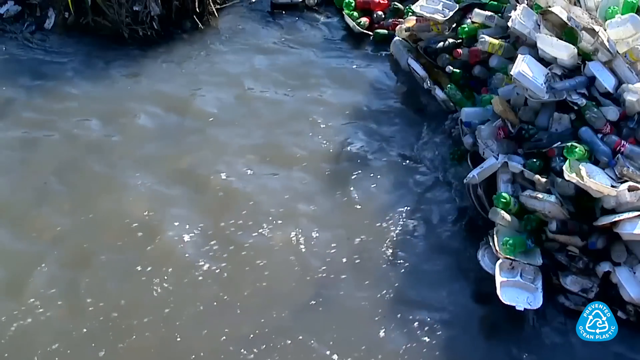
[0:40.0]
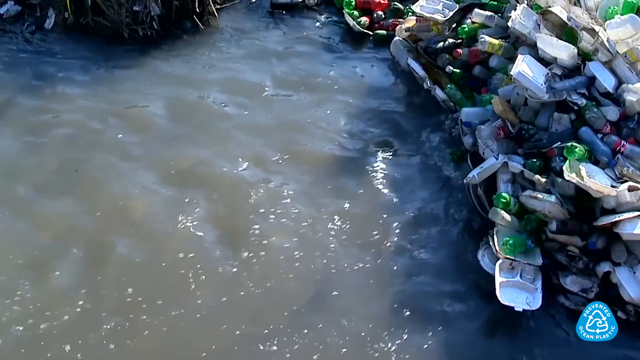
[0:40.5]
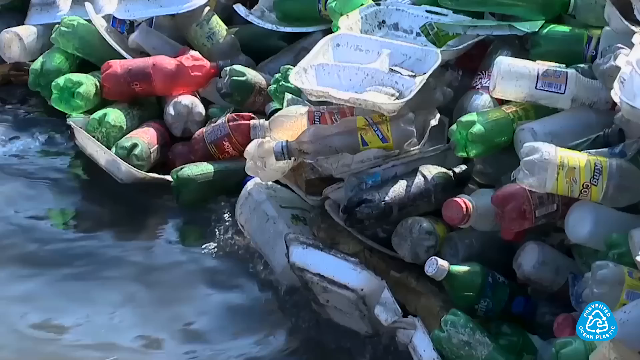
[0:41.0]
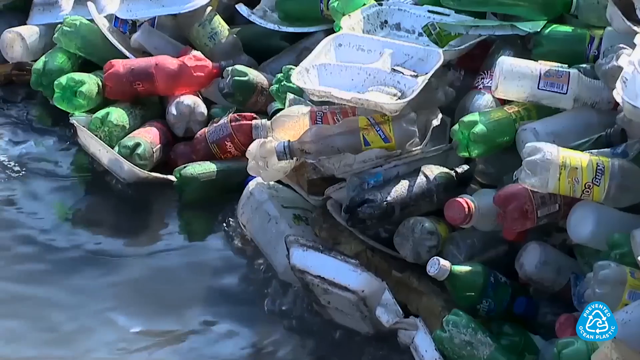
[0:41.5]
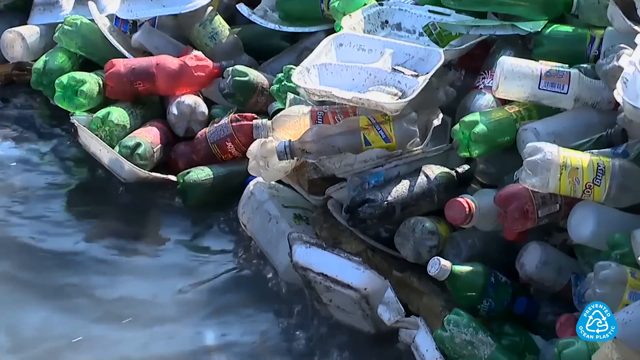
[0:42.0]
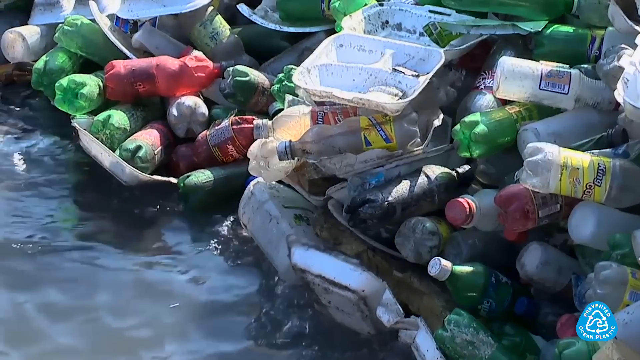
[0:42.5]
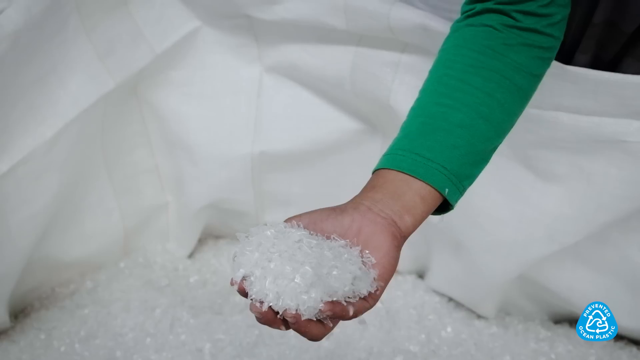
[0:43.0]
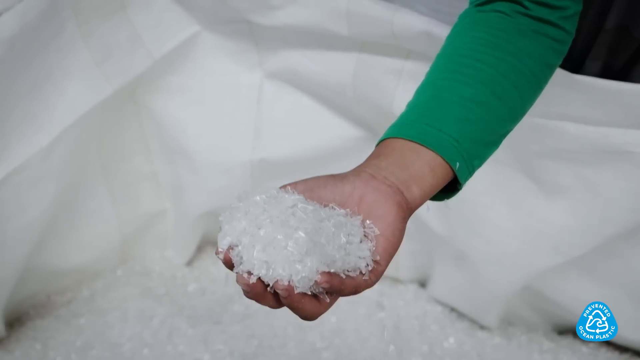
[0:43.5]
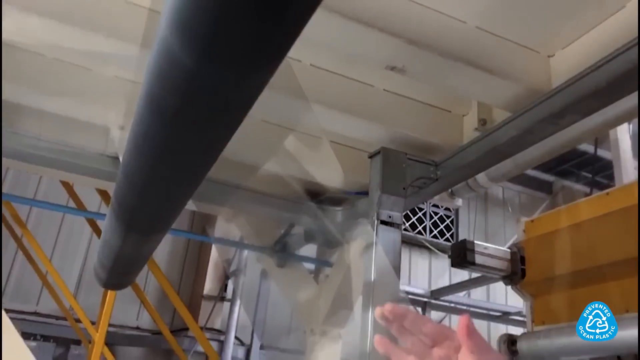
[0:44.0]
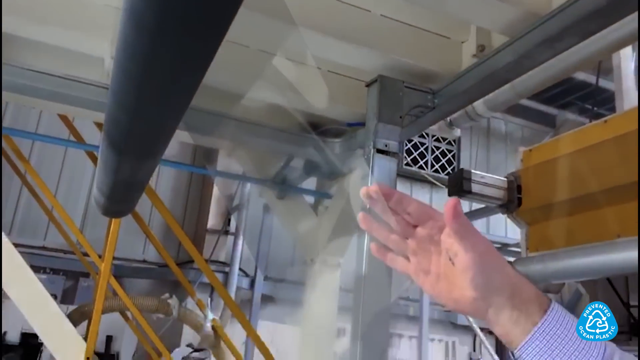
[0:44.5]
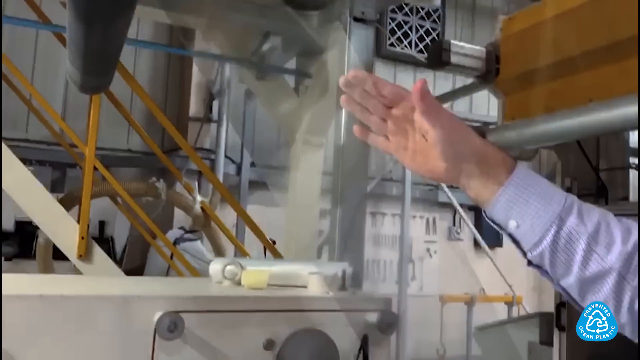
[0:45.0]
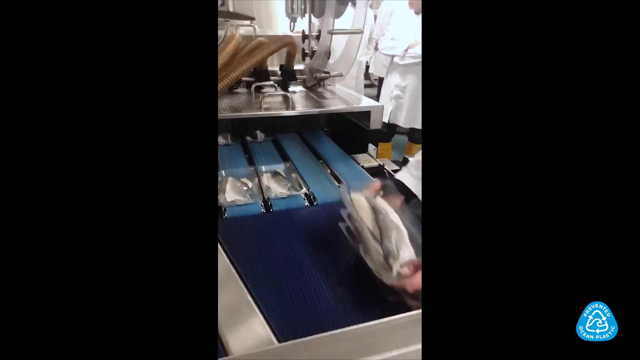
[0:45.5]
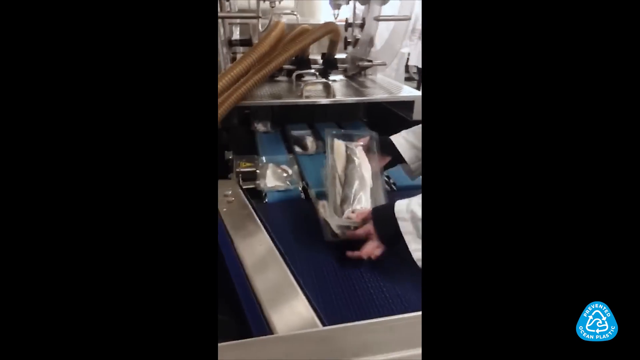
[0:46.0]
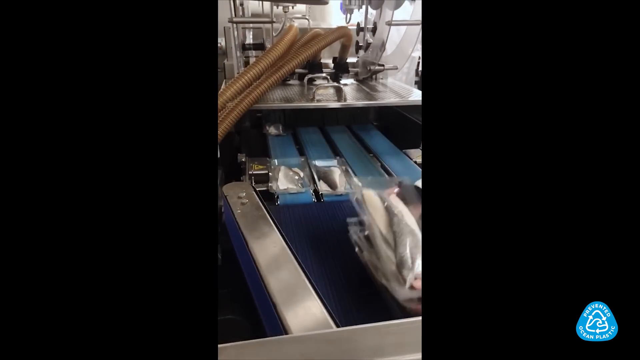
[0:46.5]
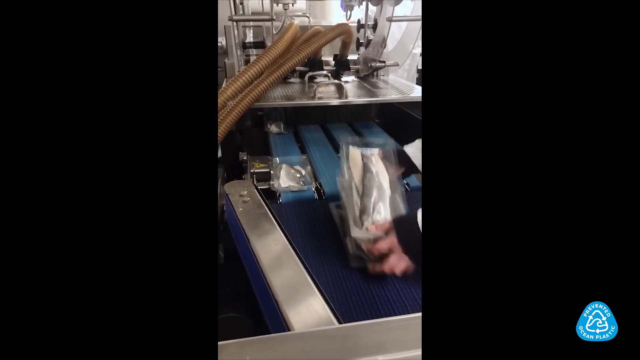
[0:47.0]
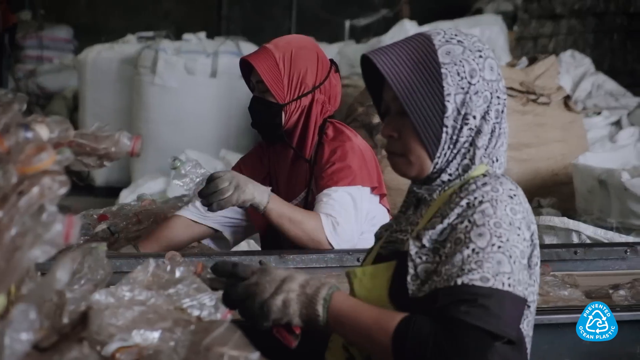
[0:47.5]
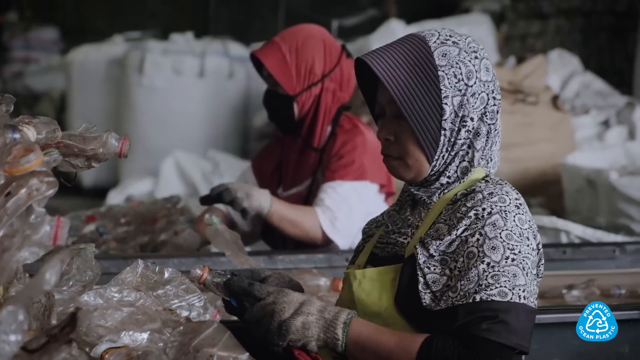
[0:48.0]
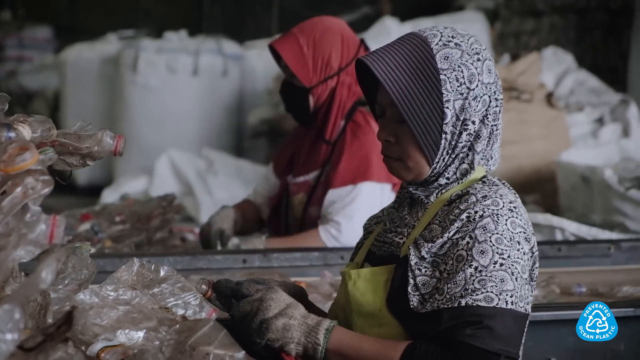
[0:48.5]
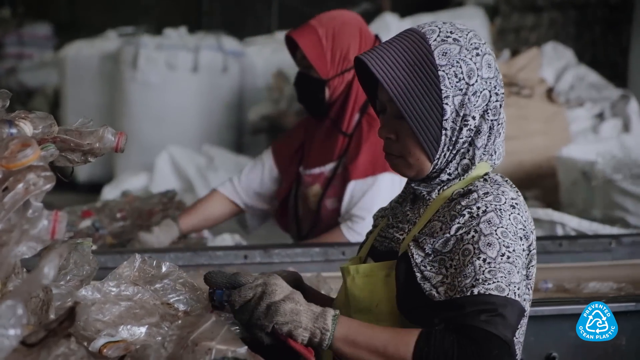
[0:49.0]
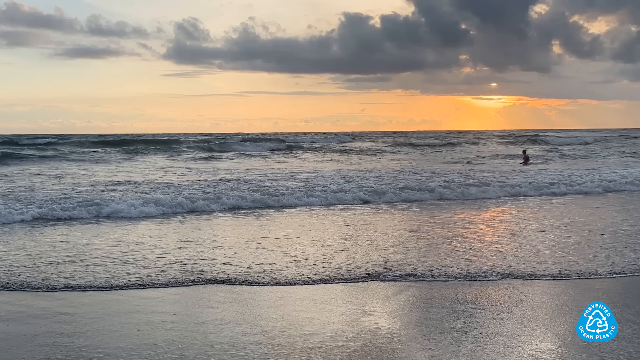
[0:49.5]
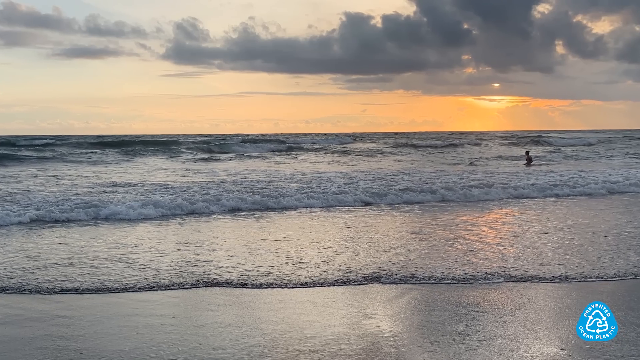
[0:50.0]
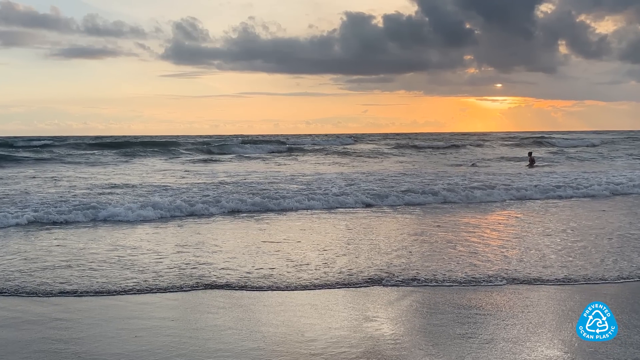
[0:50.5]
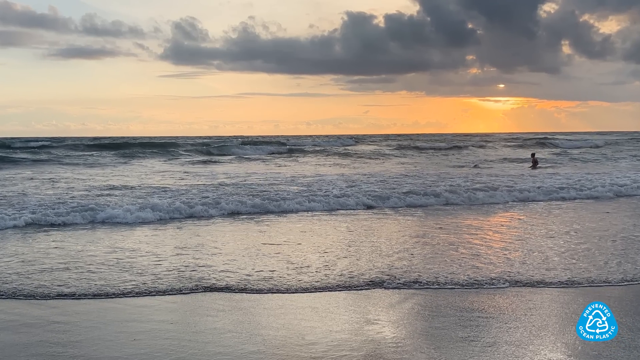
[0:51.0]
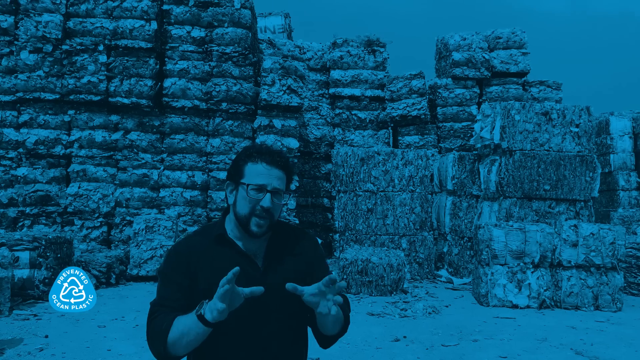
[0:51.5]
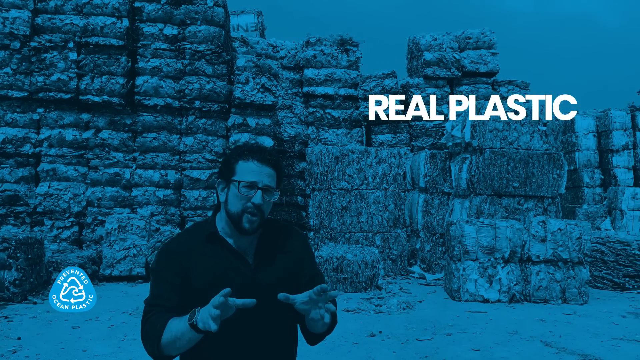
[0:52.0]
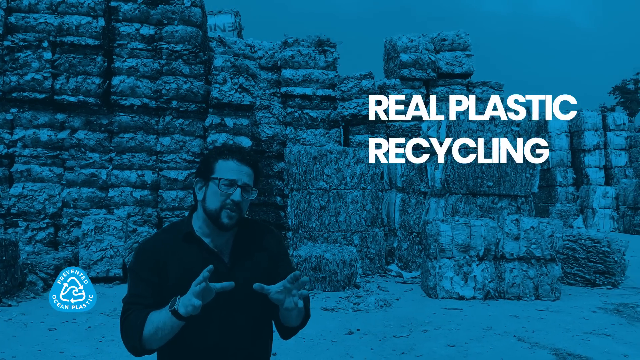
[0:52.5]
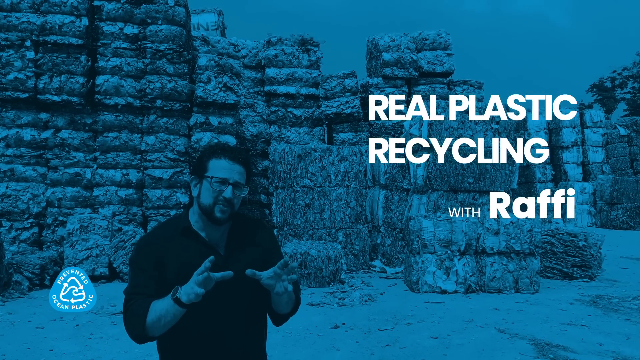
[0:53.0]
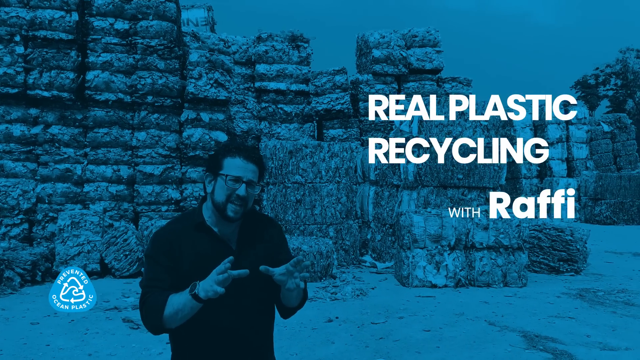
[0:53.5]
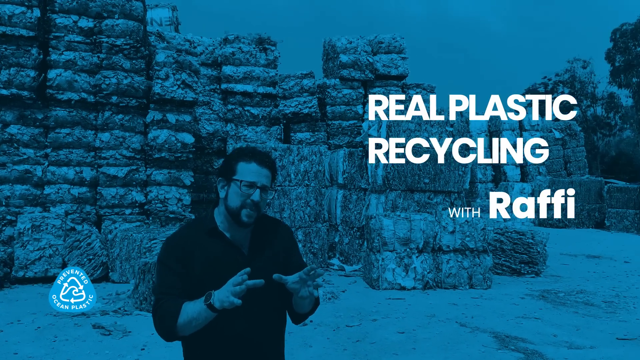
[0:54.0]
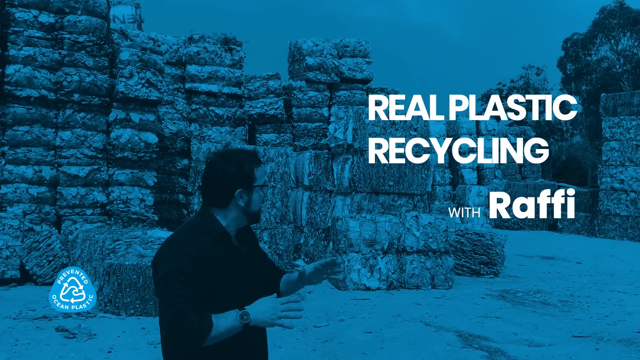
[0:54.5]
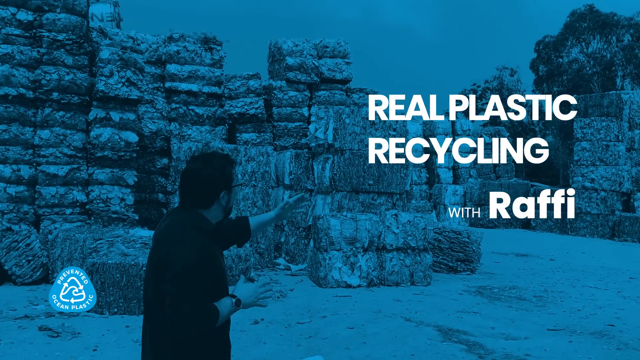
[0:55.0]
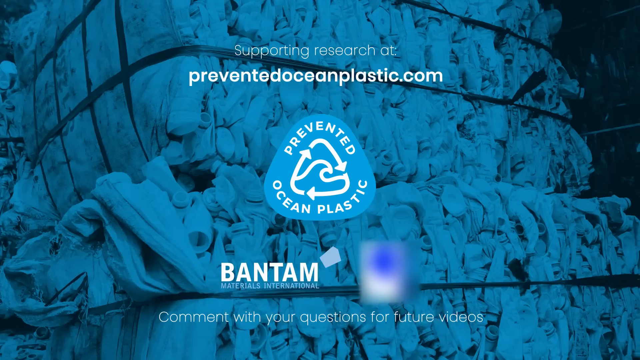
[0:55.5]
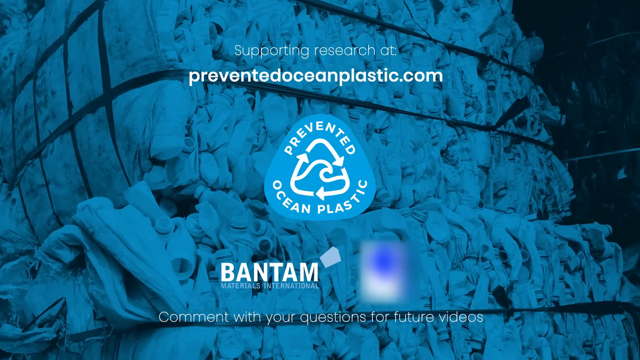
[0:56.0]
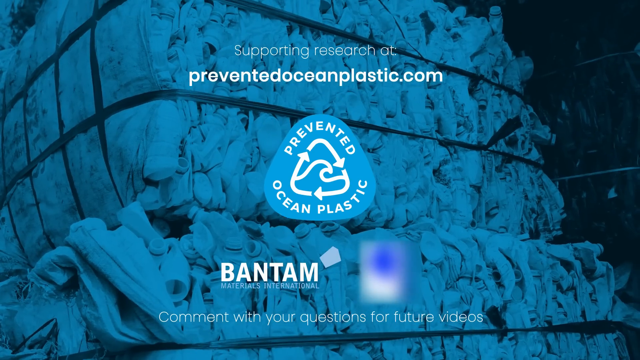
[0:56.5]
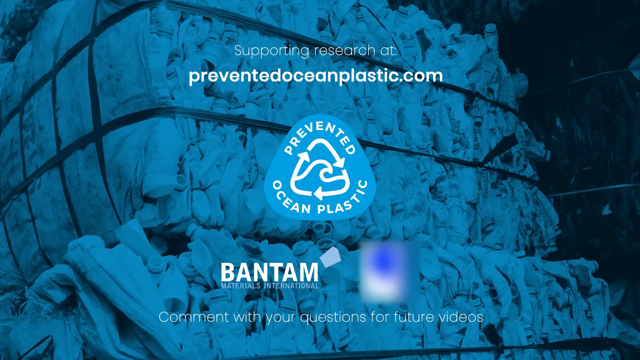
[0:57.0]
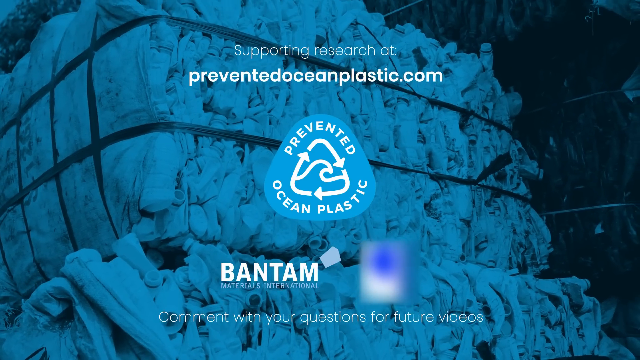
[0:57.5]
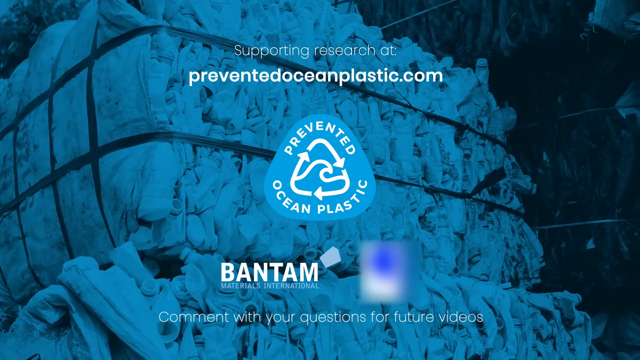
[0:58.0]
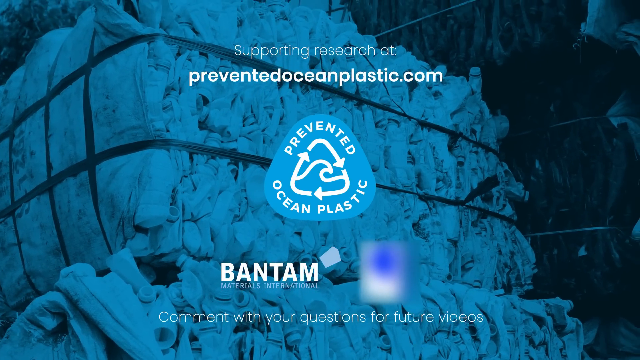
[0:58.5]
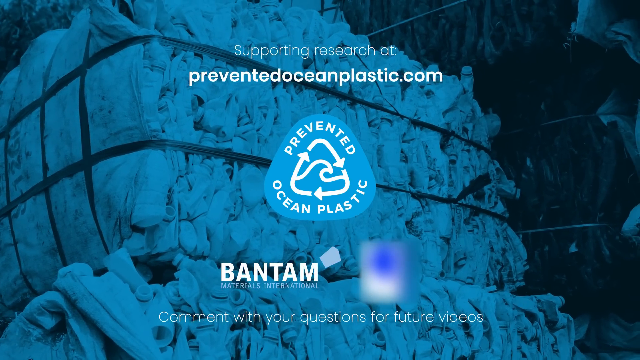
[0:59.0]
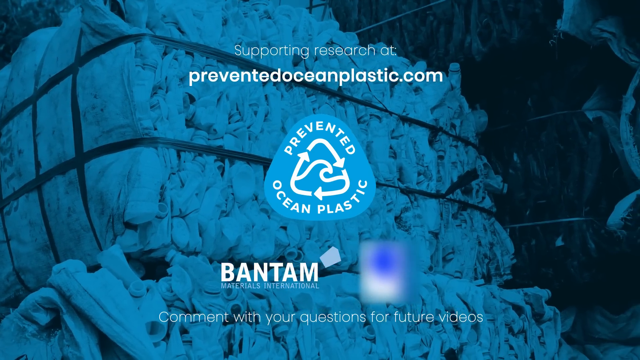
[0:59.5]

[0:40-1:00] Tons of plastic bottles collect where water is flowing, the debris getting caught up and almost making a dam of thousands of bottles. In another scene, a woman scoops up plastic particles with her right hand. Another man has his arm extended, pointing at machinery. A woman grabs something coming up from a belt with her right hand, collecting it; she wears a white jacket with black sleeves. The video goes back to the warehouse where women are separating plastic bottles, then back out to the ocean, and text reads "real plastic recycling with coffee." The gathered plastic is squished together into compact pallets, which are stacked up.